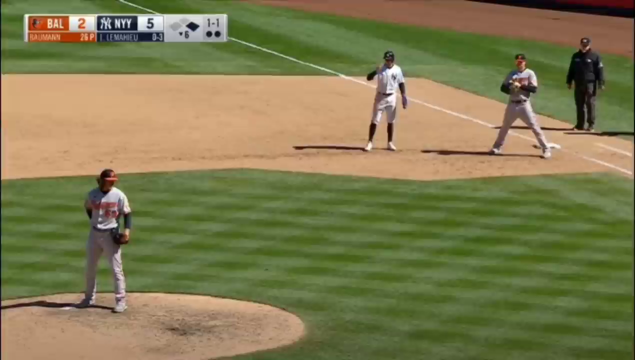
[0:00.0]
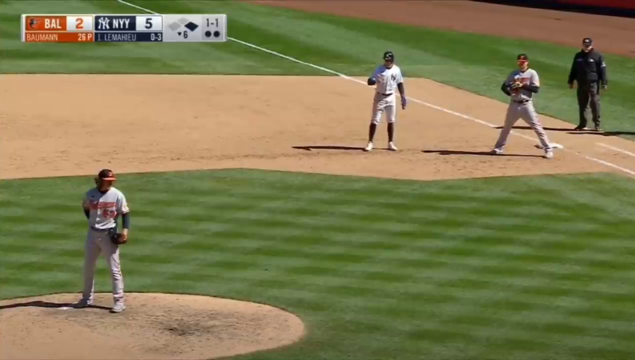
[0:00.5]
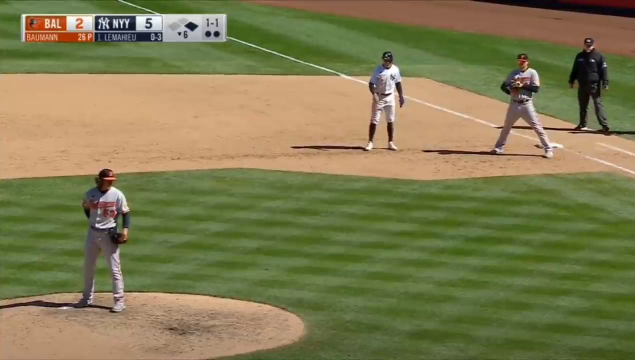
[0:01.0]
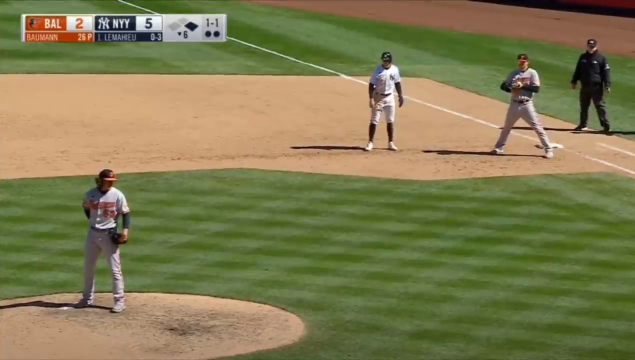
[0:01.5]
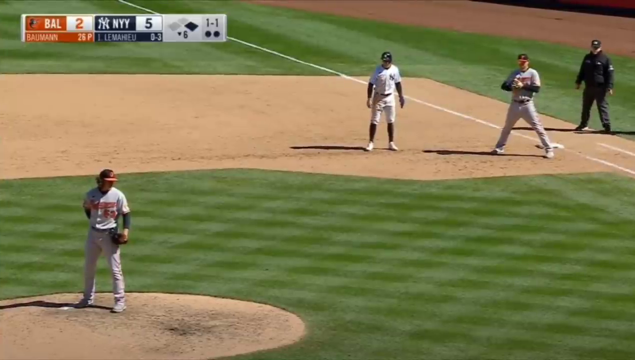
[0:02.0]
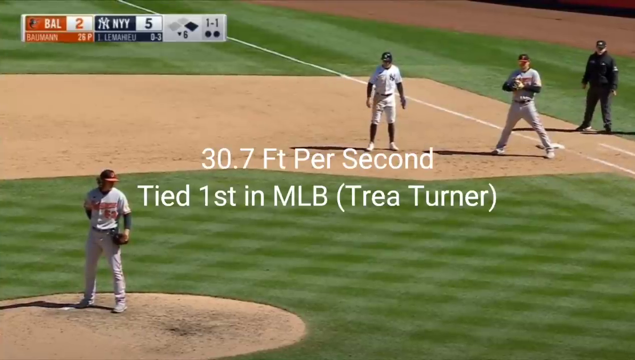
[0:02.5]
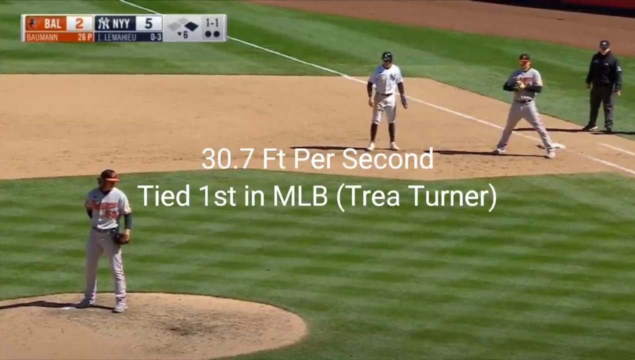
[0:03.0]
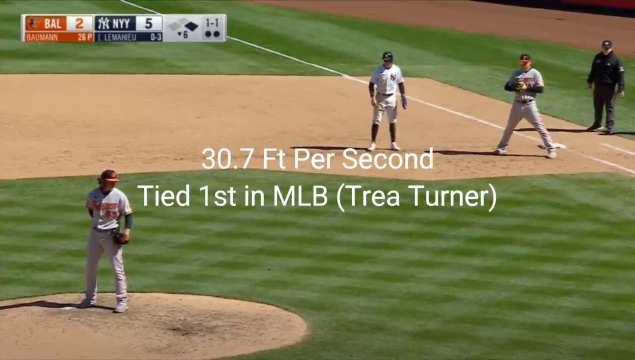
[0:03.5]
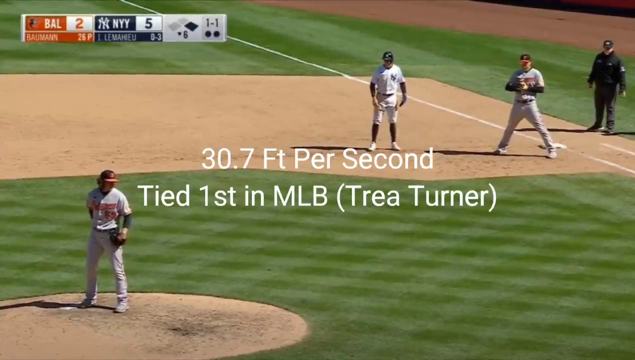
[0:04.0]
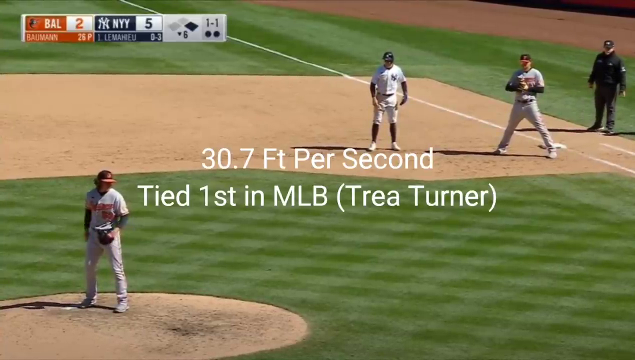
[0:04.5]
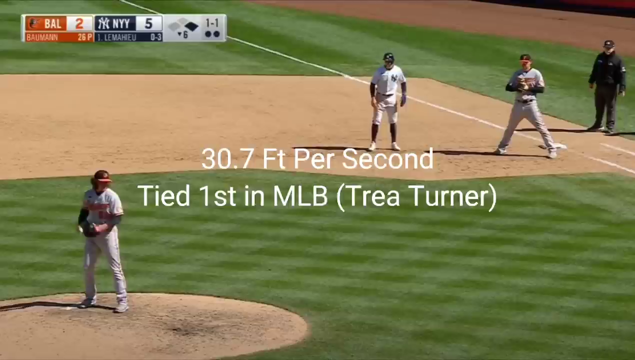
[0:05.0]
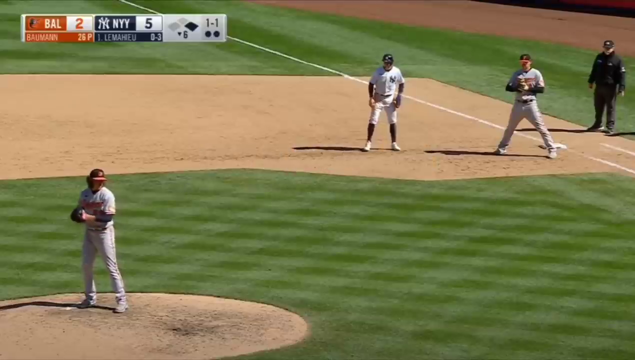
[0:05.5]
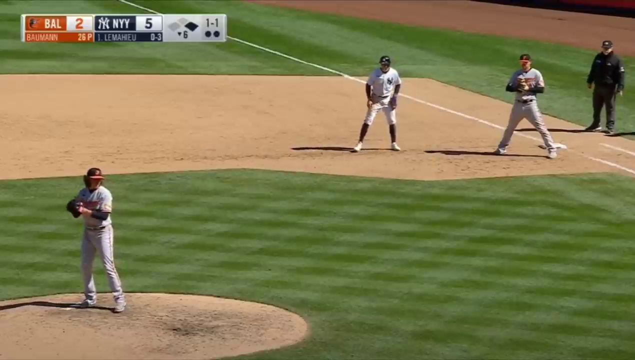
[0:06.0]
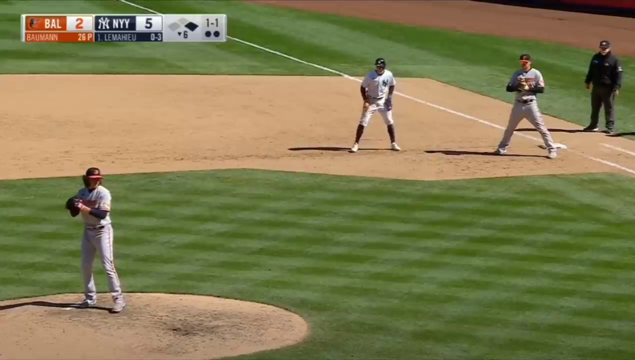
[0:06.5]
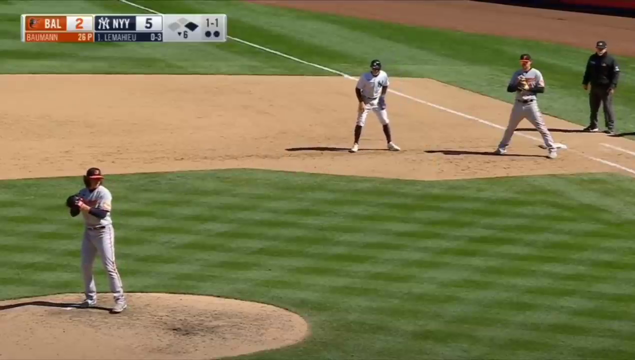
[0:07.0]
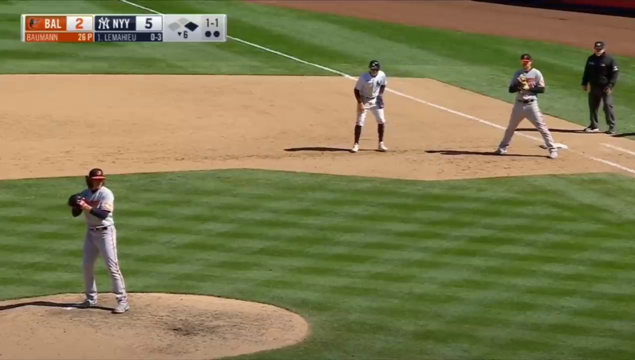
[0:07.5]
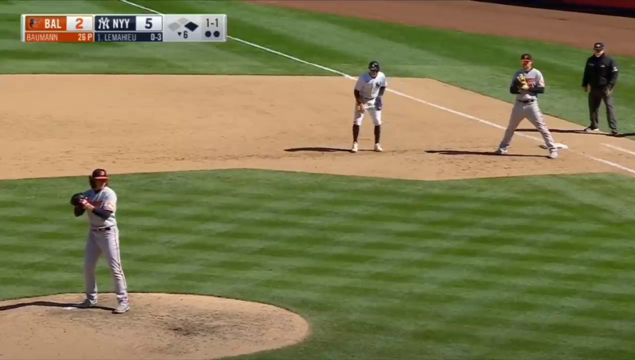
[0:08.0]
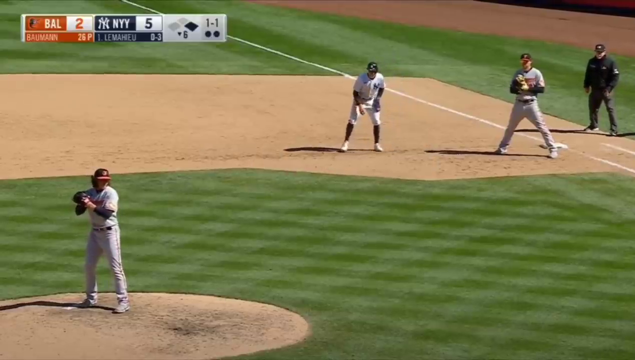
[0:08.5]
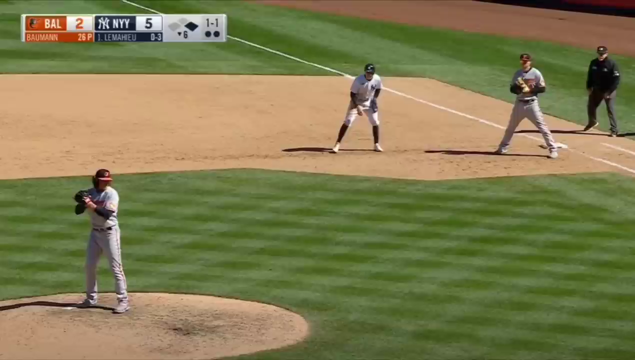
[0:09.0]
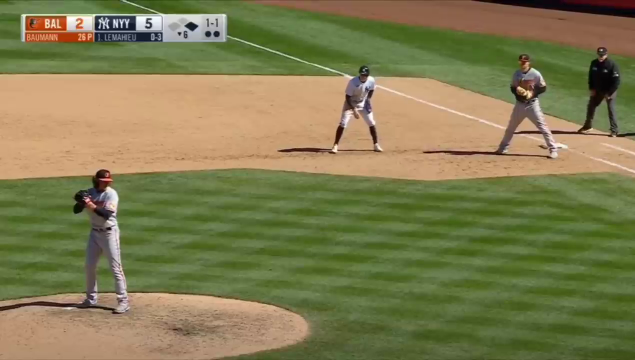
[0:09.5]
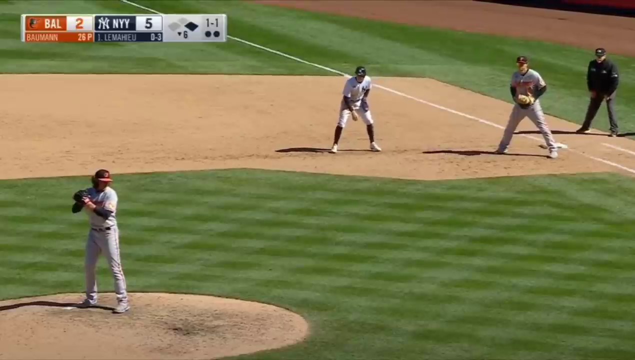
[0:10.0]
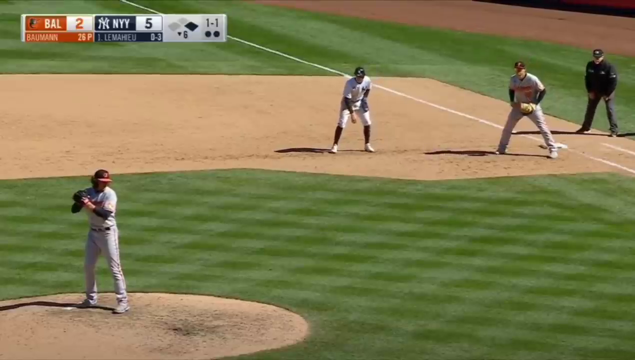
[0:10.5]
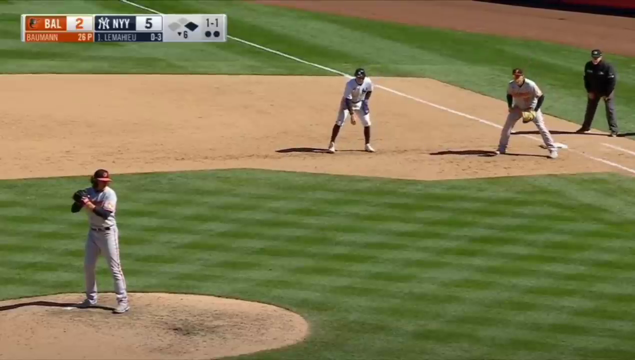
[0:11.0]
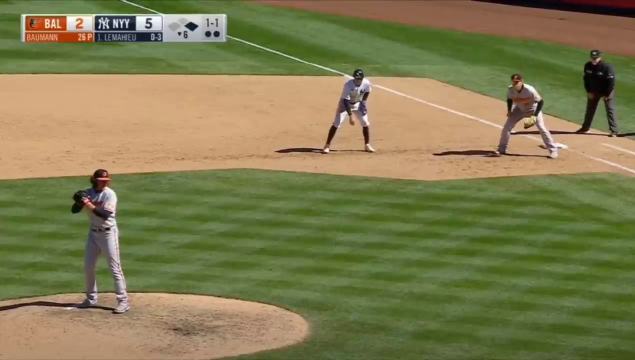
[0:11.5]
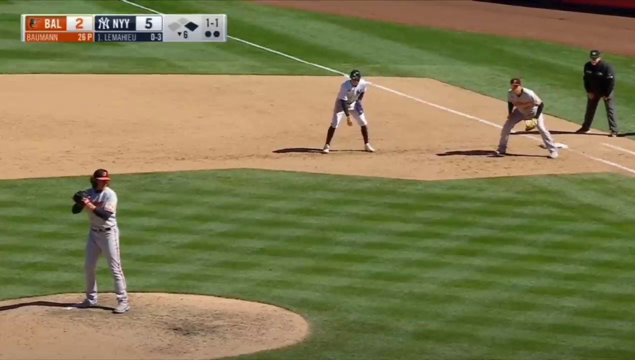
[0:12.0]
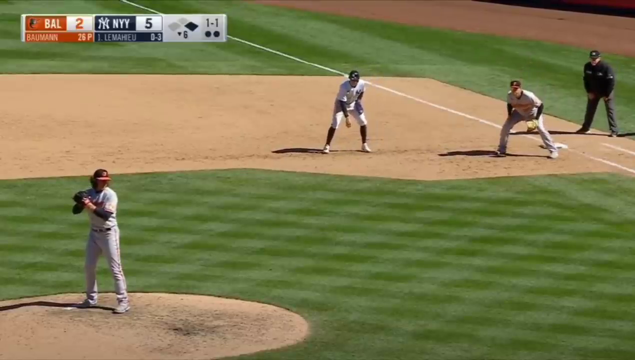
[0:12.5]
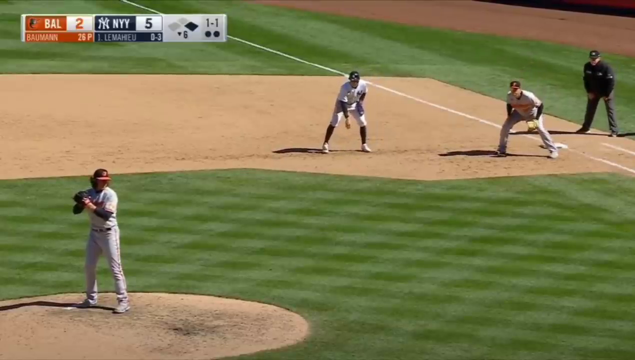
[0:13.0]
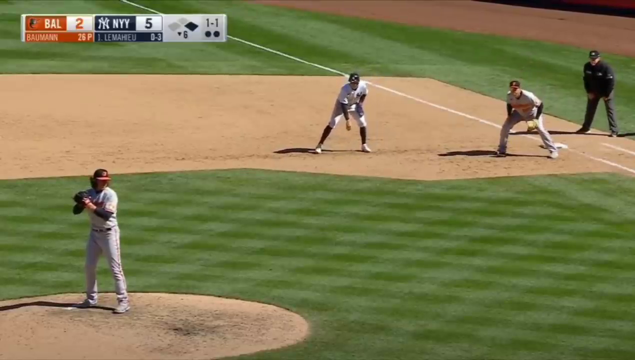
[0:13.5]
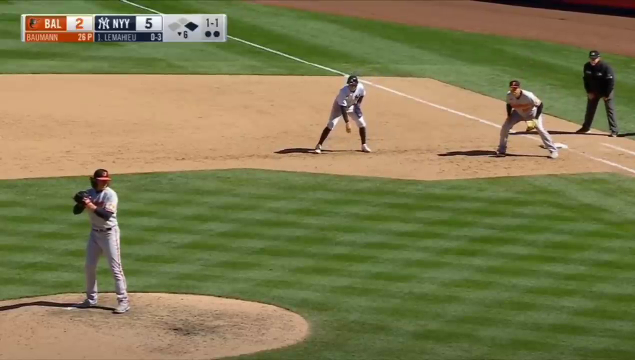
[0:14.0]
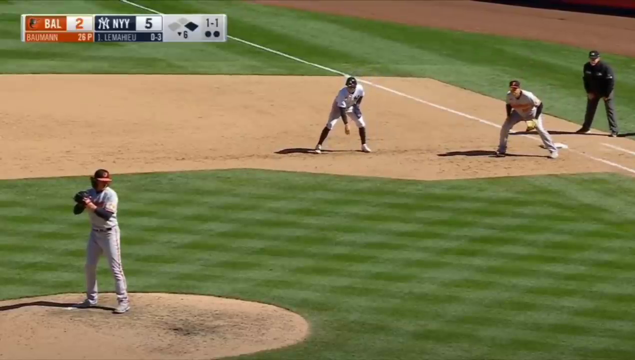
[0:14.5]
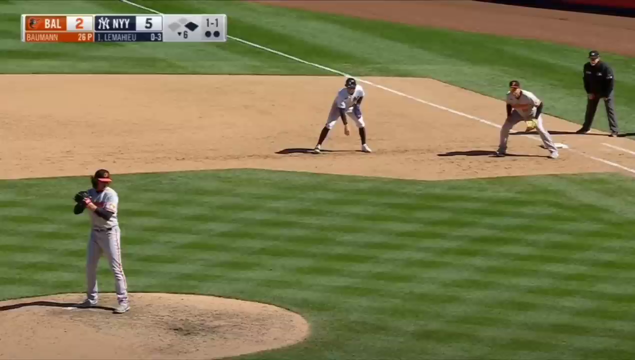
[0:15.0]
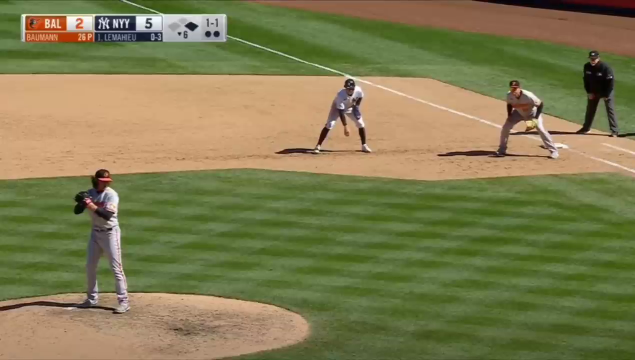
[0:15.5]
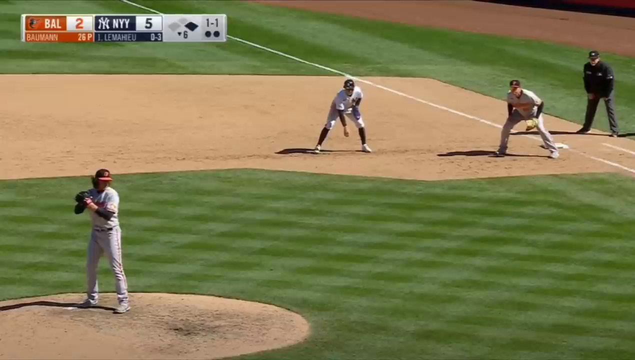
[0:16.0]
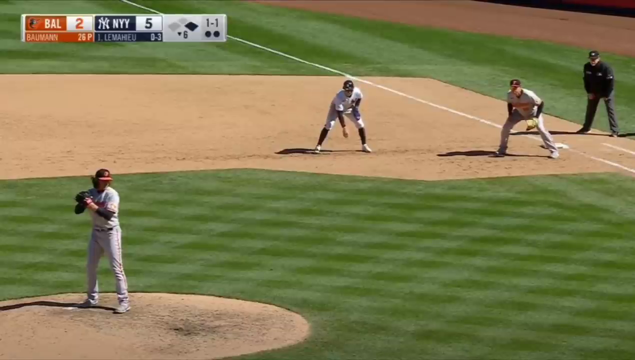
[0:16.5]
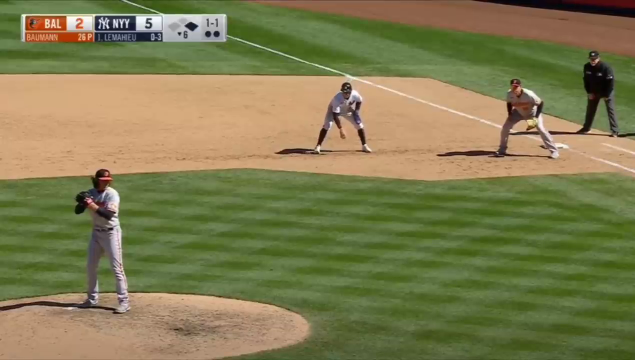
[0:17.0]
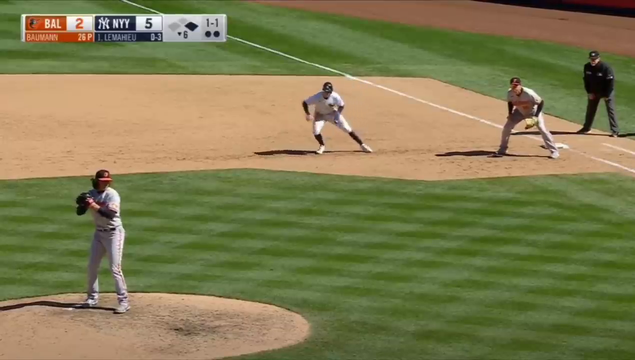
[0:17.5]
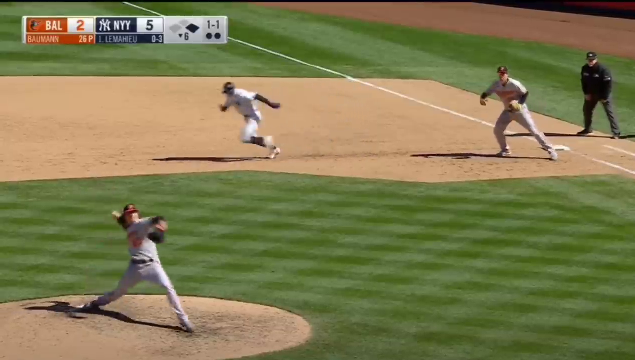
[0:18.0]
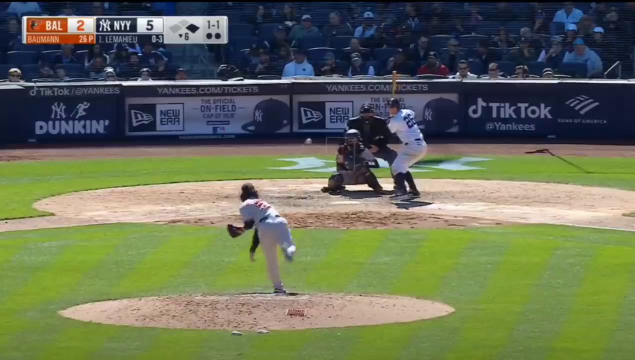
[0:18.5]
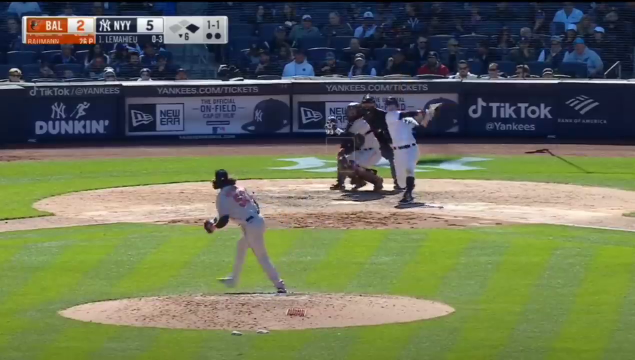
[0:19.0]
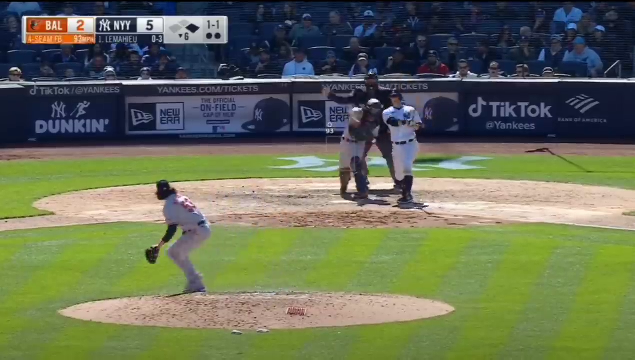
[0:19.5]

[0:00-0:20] A baseball game between the New York Yankees and the Baltimore Orioles, with the Yankees winning five to two. The footage seems to be slowed down at the start. A white caption appears on the screen reading "30.7 feet per second tied first in MLB" with "Trey Turner" in parentheses. In the slowed-down footage, the pitcher looks like he is about to bend down to catch the ball while the other person throws it. The footage then speeds up and runs very fast as the ball is thrown and the game begins. The batter hits the ball with force and the play unfolds. The grass the players are on looks freshly done, with lines down it that appear decorative.